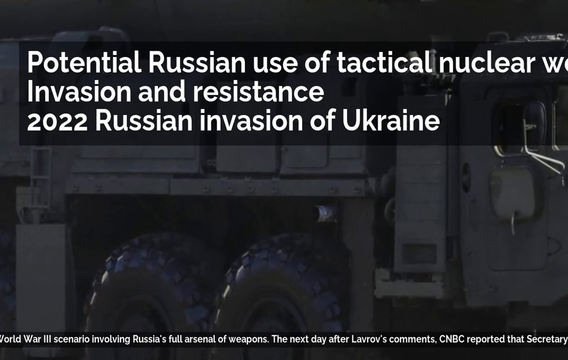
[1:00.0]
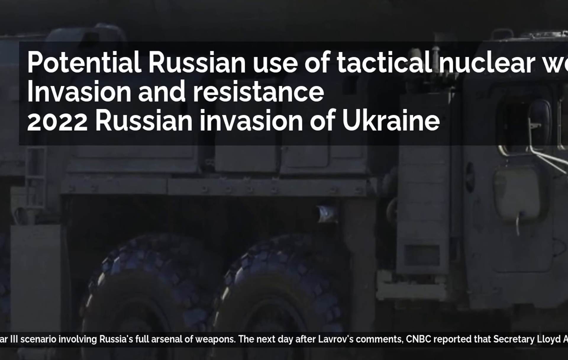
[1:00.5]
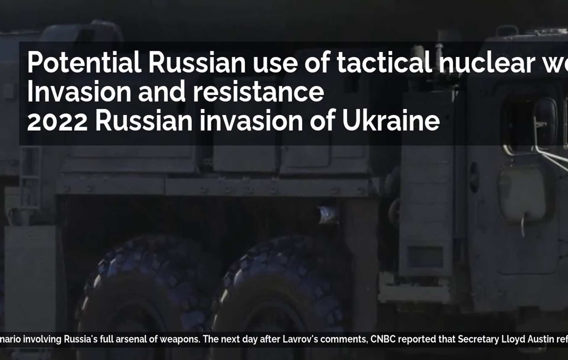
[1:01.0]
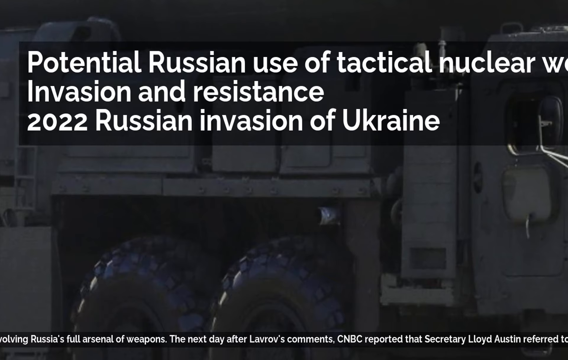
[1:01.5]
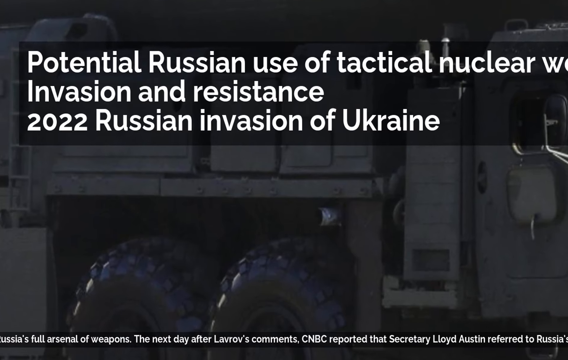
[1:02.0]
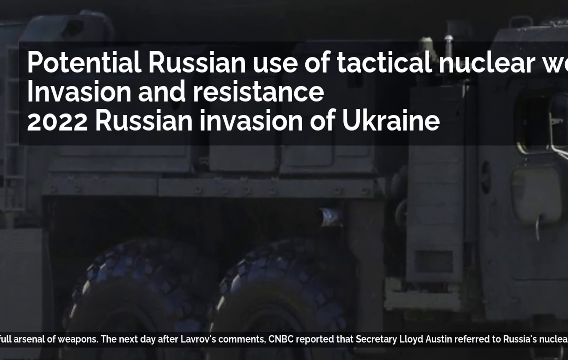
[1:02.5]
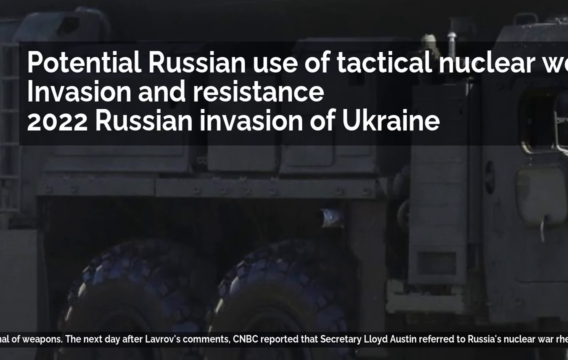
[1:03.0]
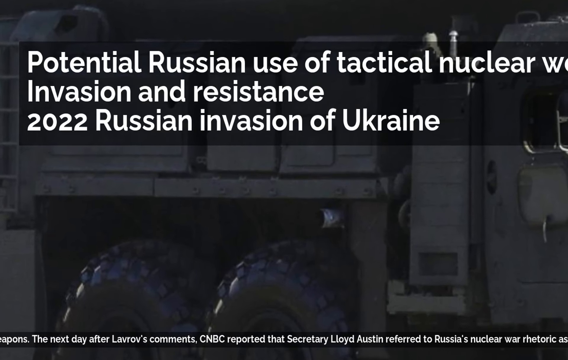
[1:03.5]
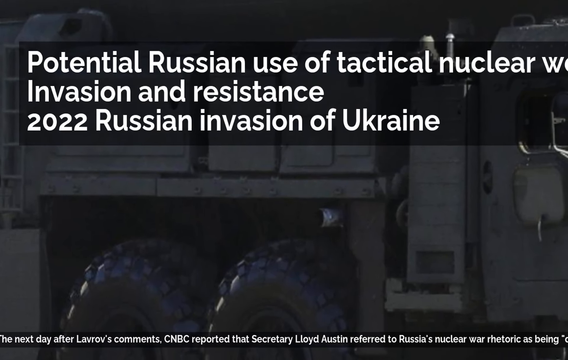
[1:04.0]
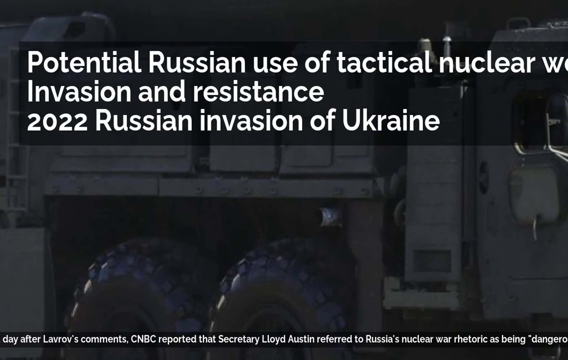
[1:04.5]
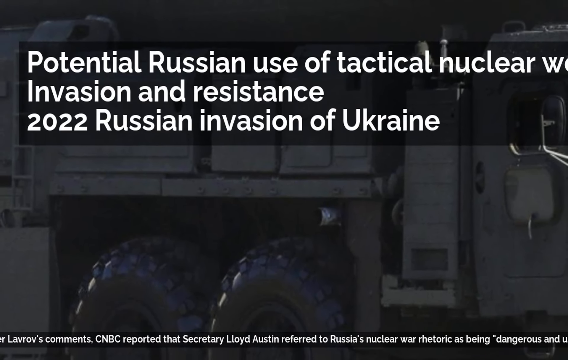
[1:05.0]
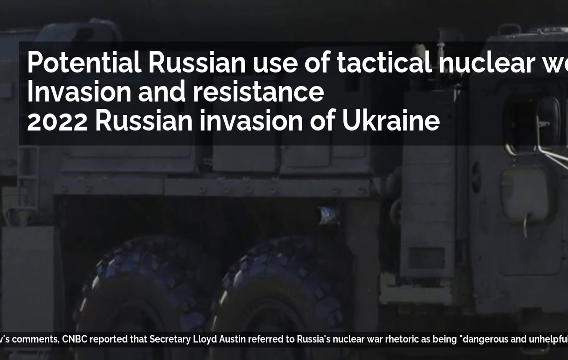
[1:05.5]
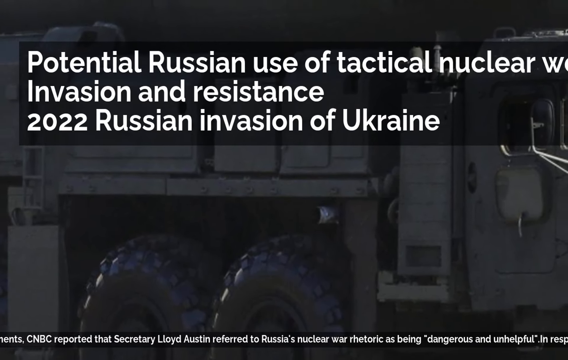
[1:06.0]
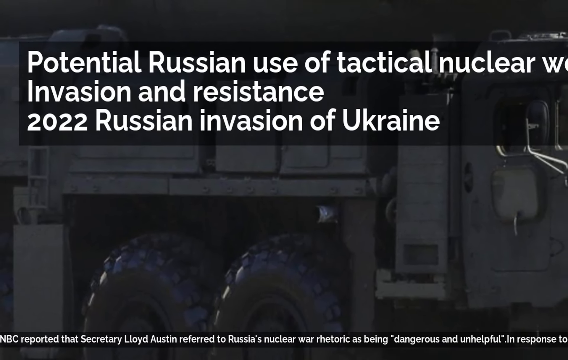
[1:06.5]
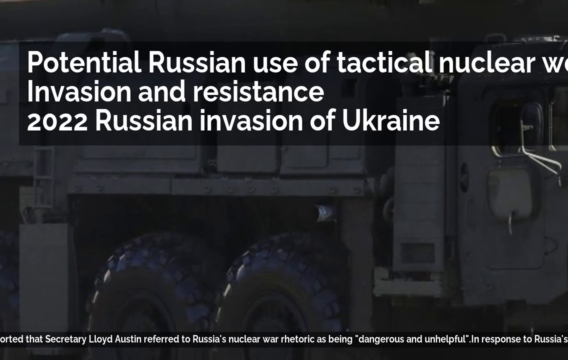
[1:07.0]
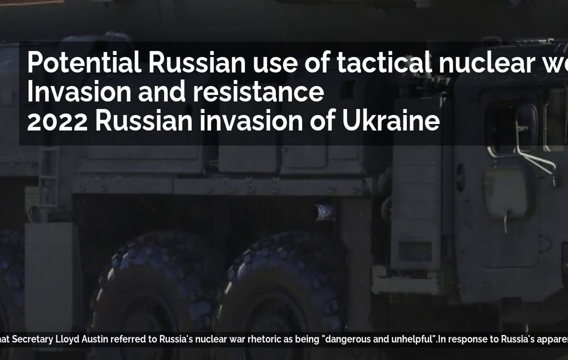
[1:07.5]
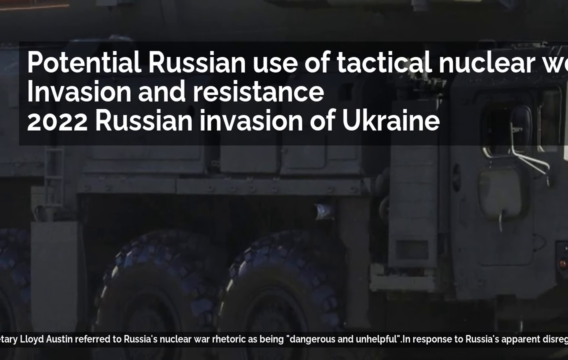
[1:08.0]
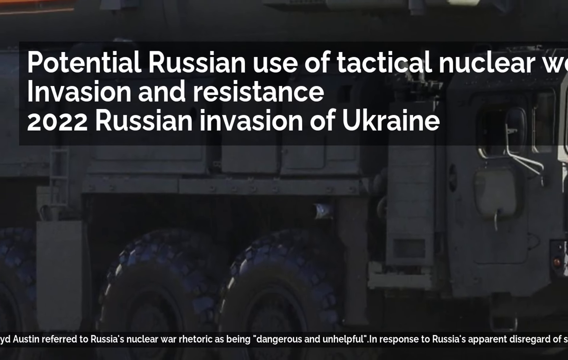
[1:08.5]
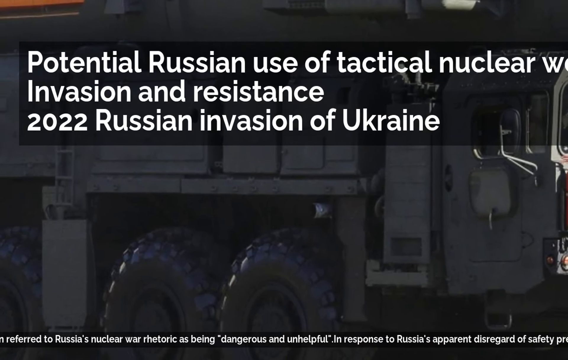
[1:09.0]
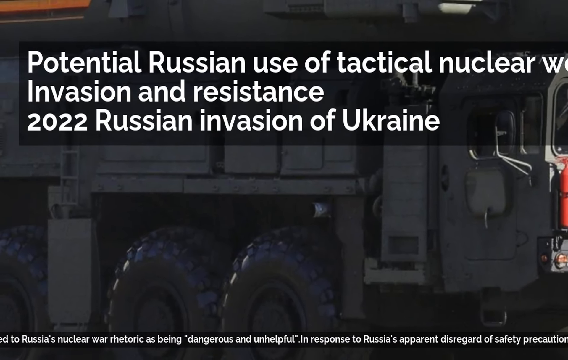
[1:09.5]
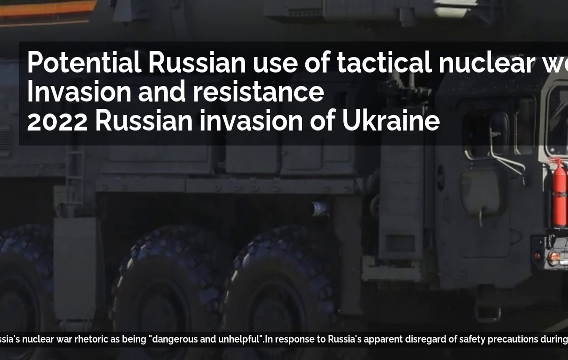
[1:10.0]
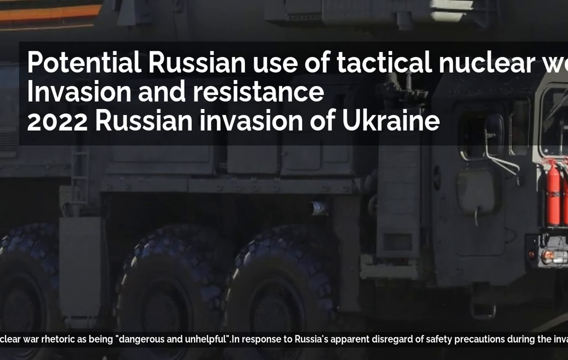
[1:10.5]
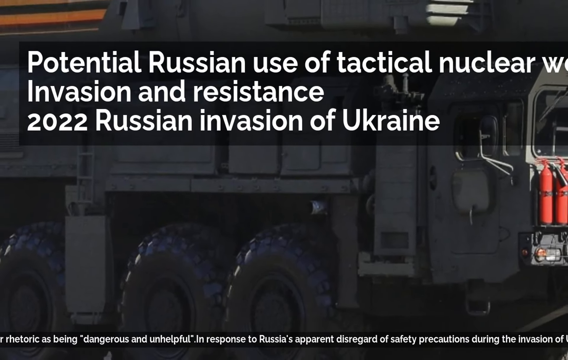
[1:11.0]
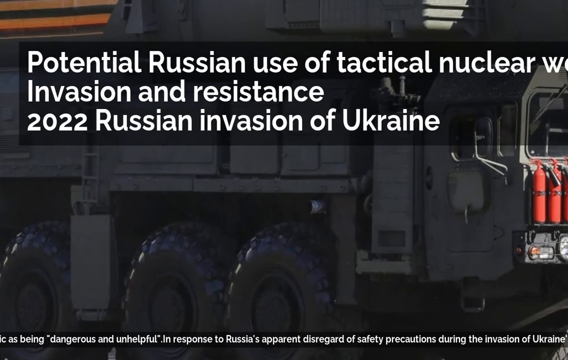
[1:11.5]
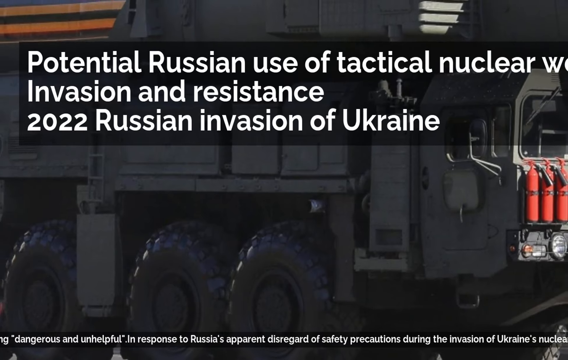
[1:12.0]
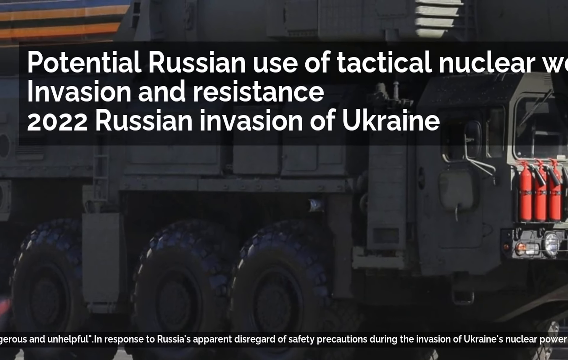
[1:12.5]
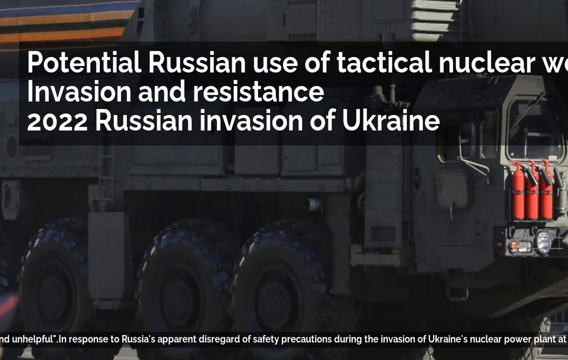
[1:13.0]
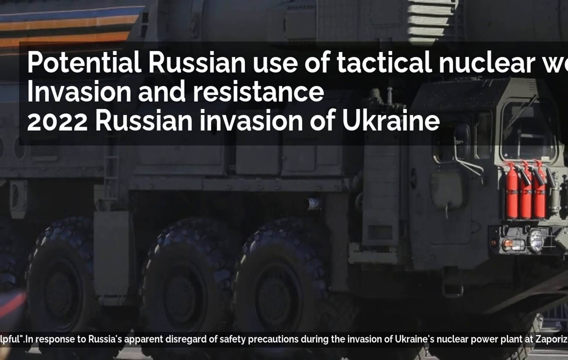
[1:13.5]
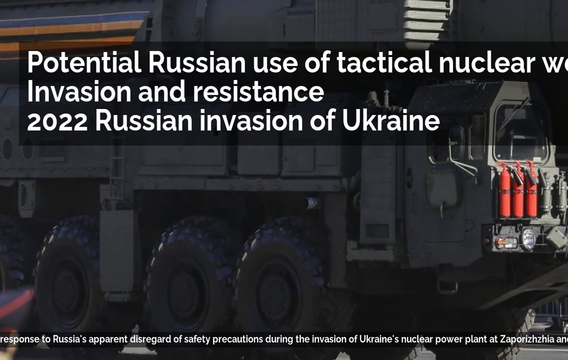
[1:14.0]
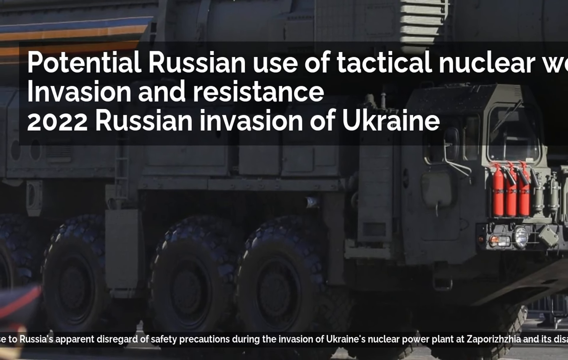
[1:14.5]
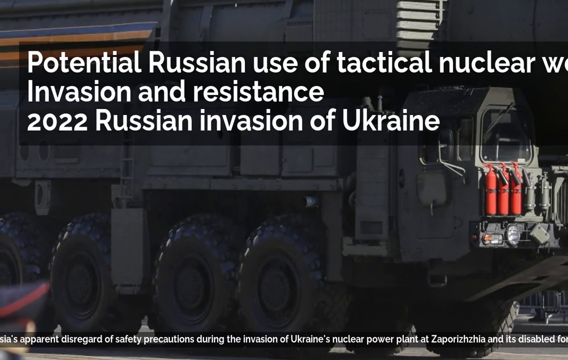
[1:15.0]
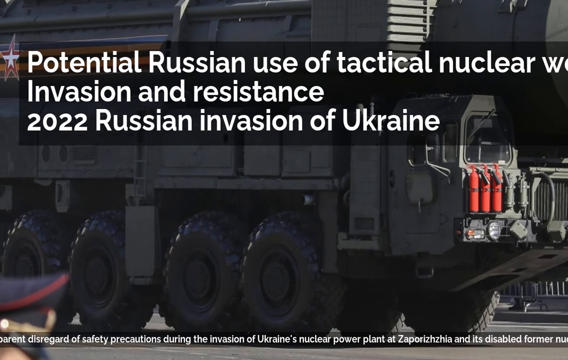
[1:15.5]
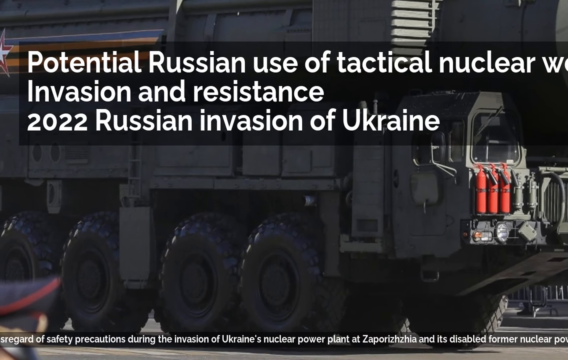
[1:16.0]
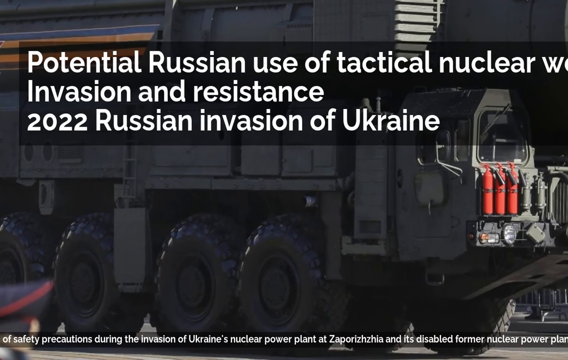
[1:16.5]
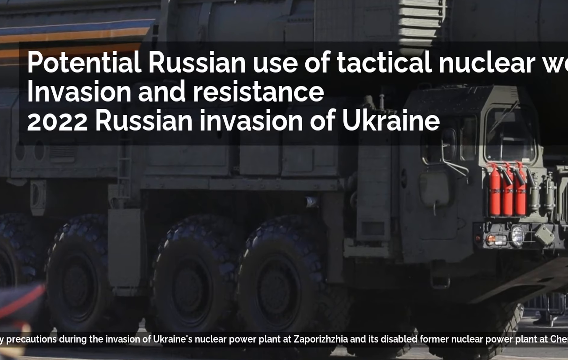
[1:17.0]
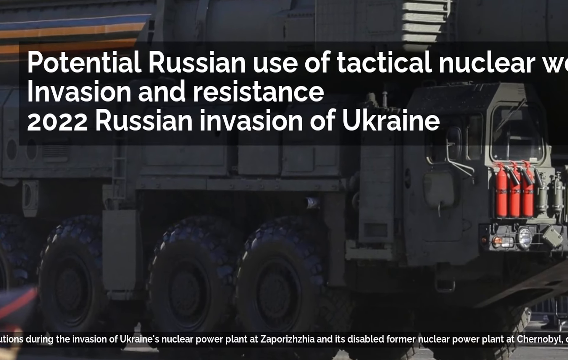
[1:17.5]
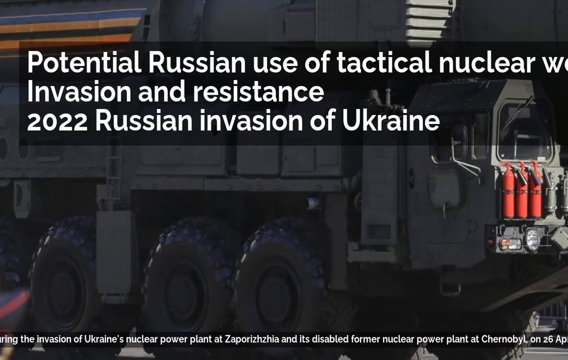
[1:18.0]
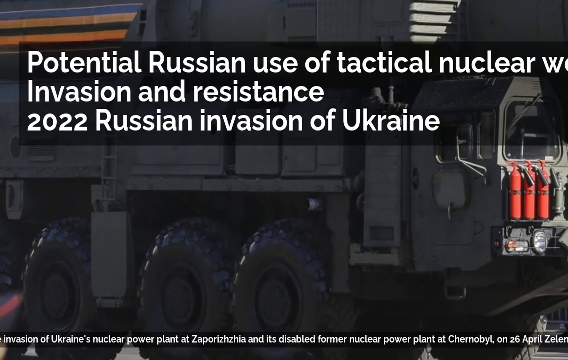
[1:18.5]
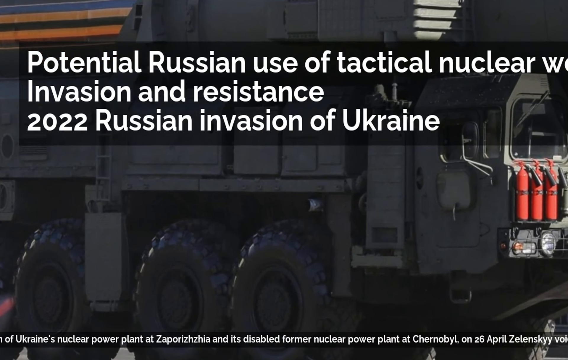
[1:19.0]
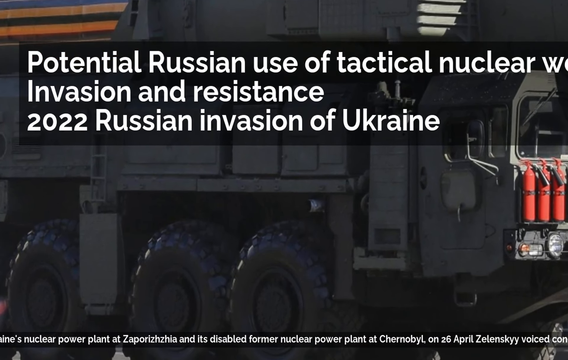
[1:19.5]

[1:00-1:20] The video zooms in and out on the image of the dark grey armored military vehicle, which apparently carries war missiles. The vehicle is heavily armored and quite large, and looks like it is made of very thick metal or steel, presumably bomb- or landmine-proof, perhaps much like an armored tank. It rides on very large, thick wheels for all-terrain driving. At the bottom of the screen, the text ribbon continues: "the next day after Lavrov's comments, CNBC reported that Secretary Lloyd Austin referred to Russia's nuclear war rhetoric as being dangerous and unhelpful in response to Russia's apparent disregard of safety precautions during the invasion of Ukraine's nuclear power plant at Zaporizhzhia and its disabled former nuclear power plant at Chernobyl. On the 26th of April, Zelensky voiced concern that".